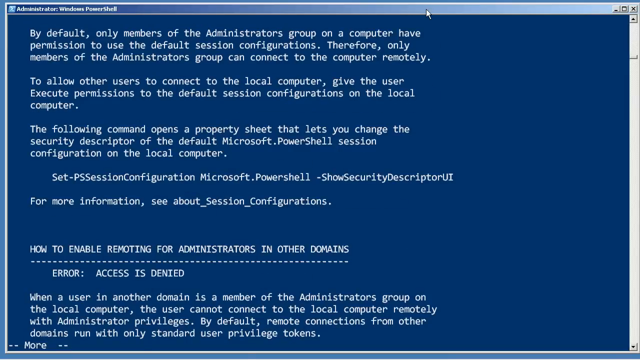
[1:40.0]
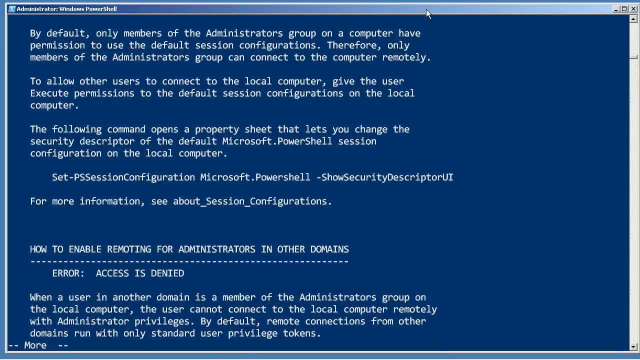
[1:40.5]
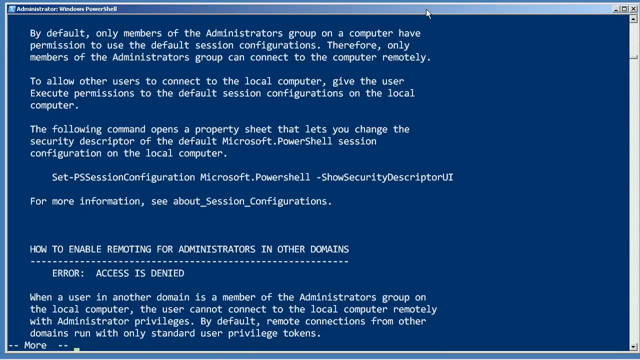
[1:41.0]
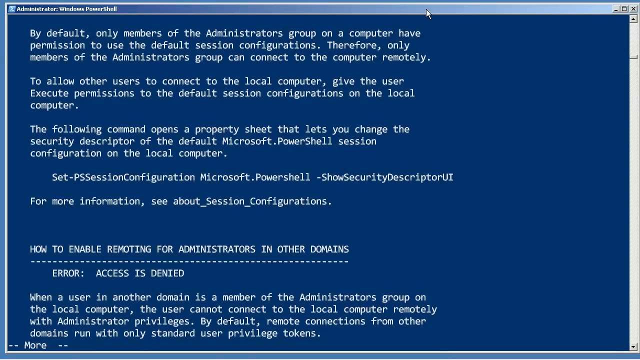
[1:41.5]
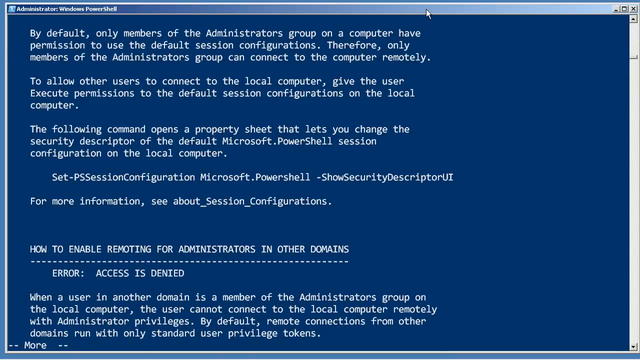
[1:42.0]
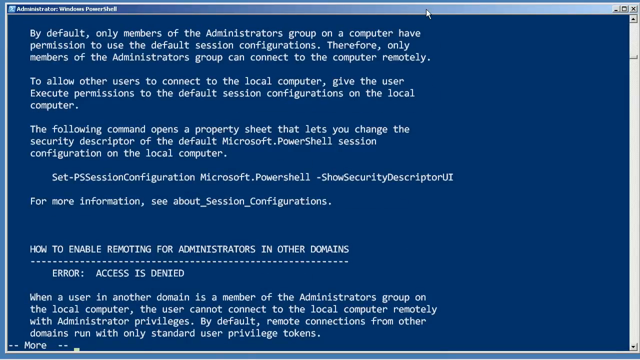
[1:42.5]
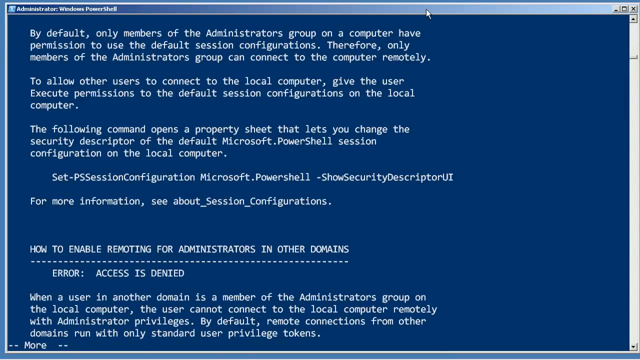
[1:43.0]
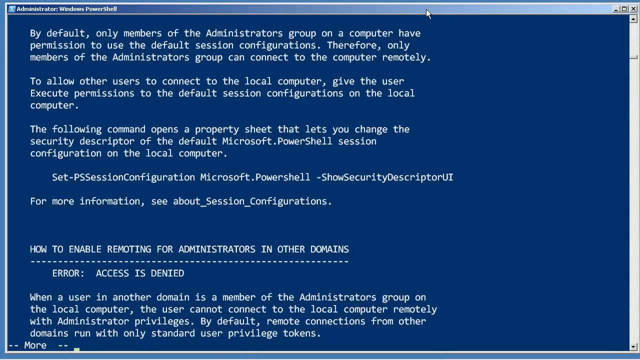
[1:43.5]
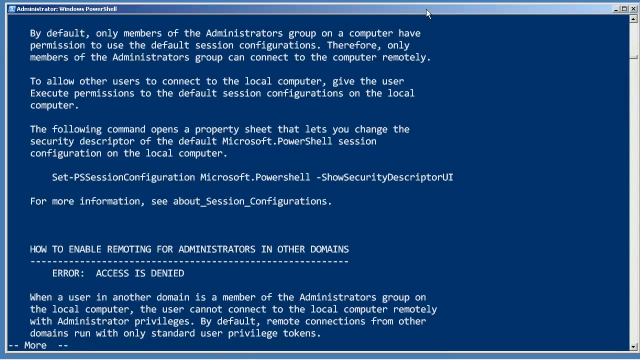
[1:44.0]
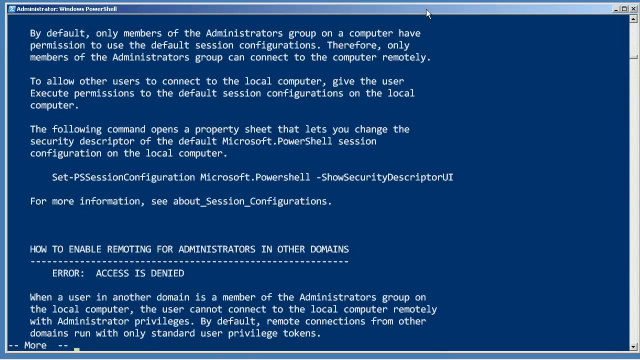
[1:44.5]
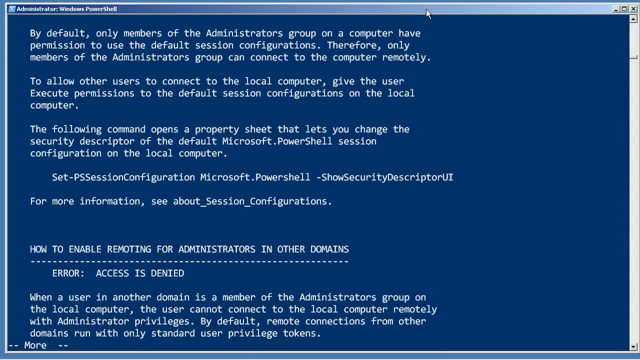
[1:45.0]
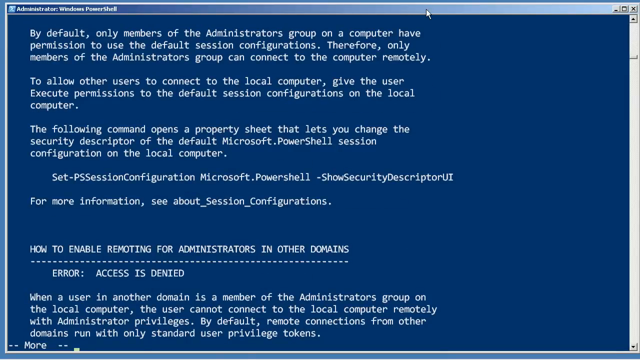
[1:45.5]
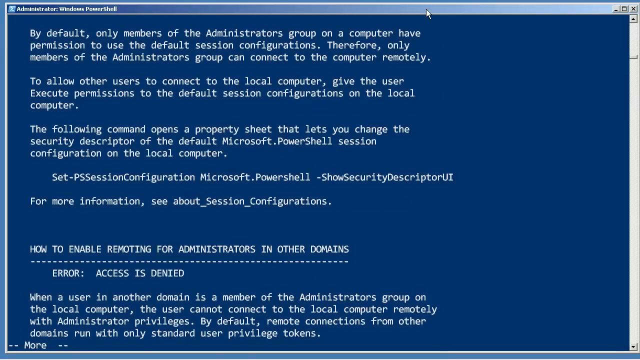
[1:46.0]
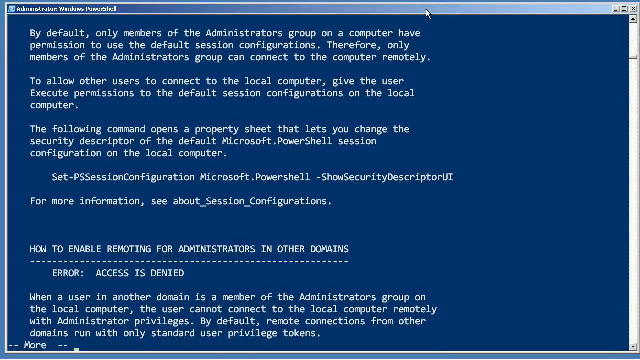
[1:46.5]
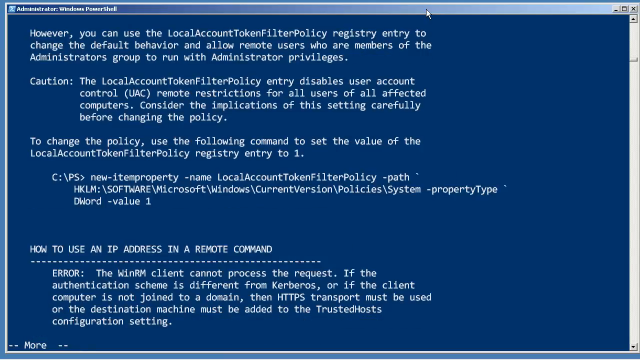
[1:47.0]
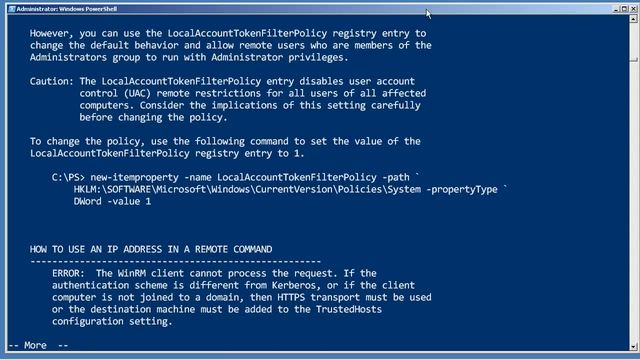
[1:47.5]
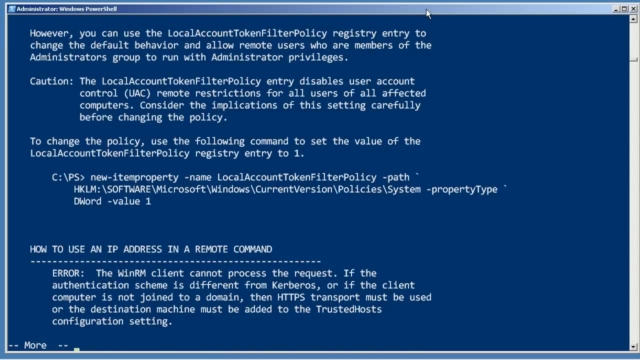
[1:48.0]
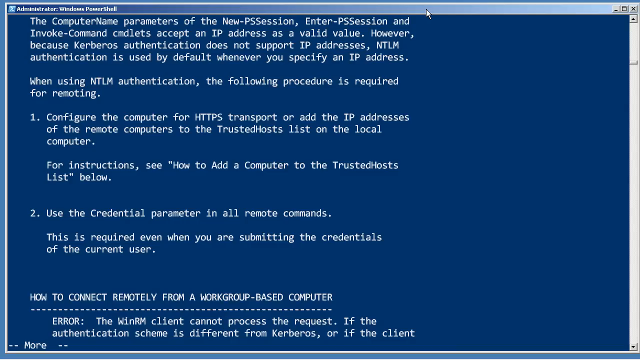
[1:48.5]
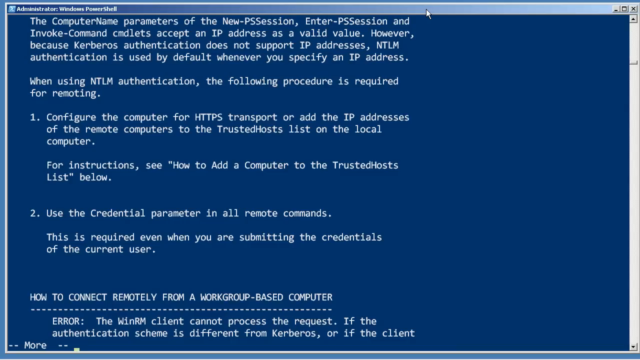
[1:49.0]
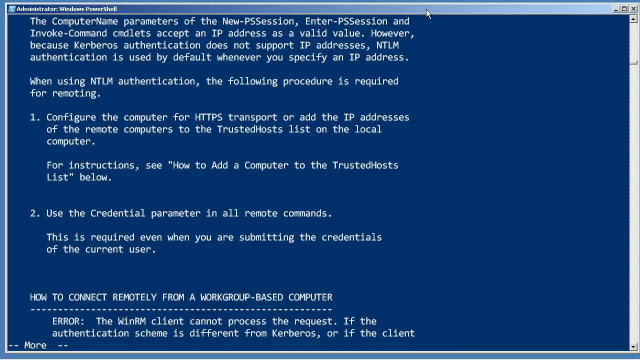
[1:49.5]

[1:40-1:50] As the scrolling continues, the text includes "only members of the administrator's group can connect to the computer remotely" and "To allow other users to connect to the local computer, give the user execute permissions to the default session configurations on the local computer." A heading about how to enable remoting for administrators in other domains appears, followed by "access denied." The person is still scrolling down, and near the end the text reads "when using NTLM authentication, the following procedure is required," with two items listed.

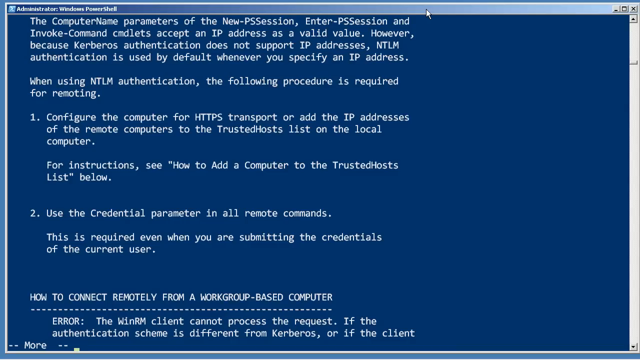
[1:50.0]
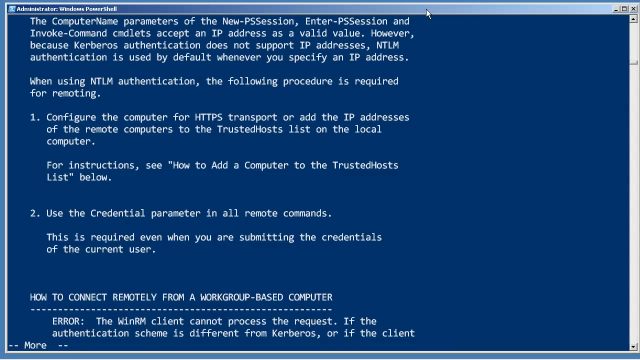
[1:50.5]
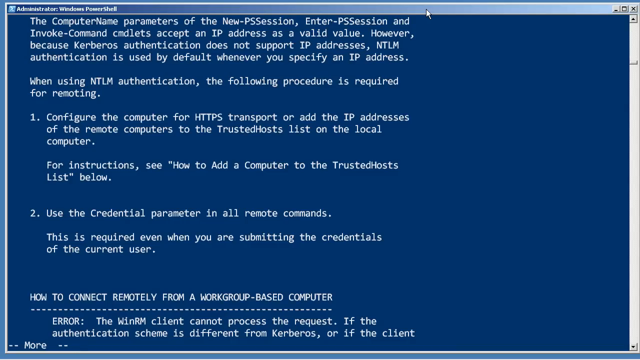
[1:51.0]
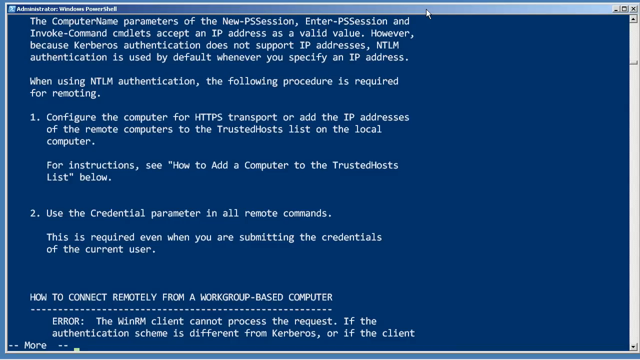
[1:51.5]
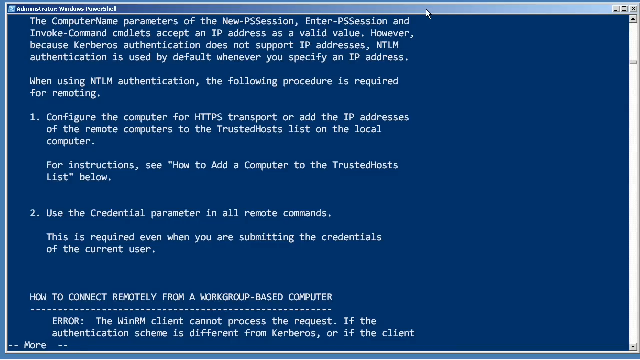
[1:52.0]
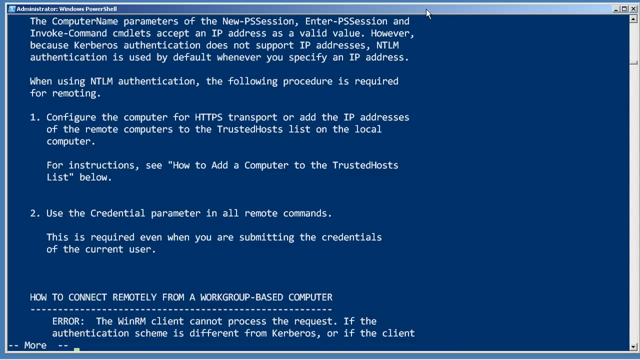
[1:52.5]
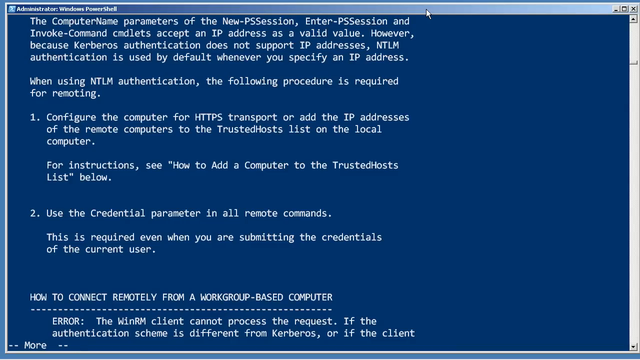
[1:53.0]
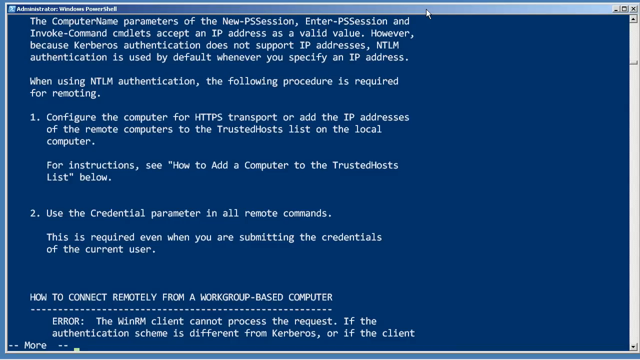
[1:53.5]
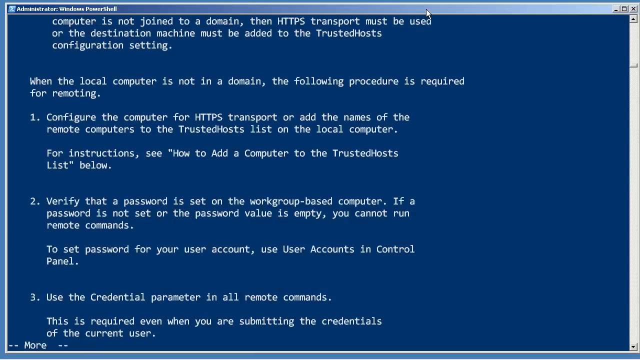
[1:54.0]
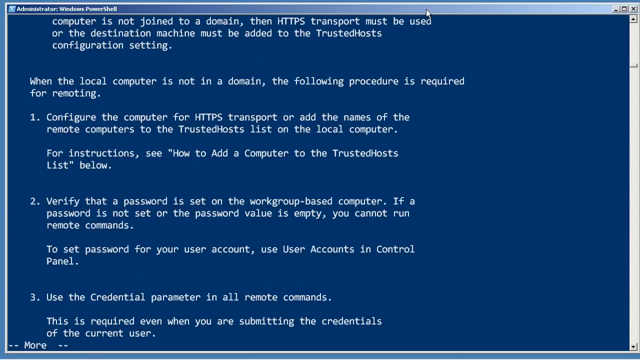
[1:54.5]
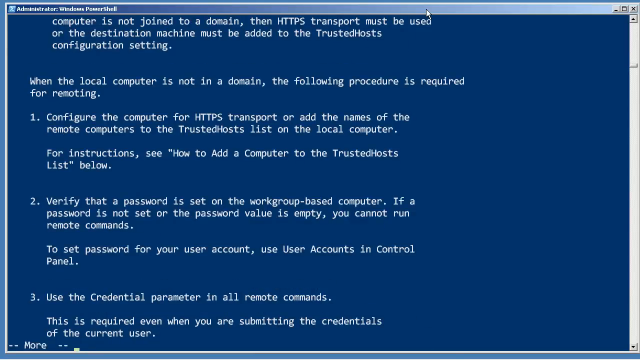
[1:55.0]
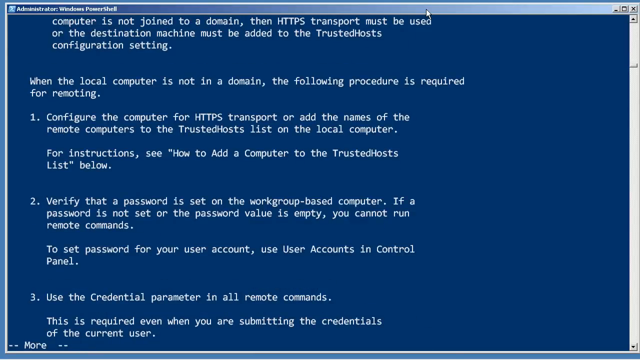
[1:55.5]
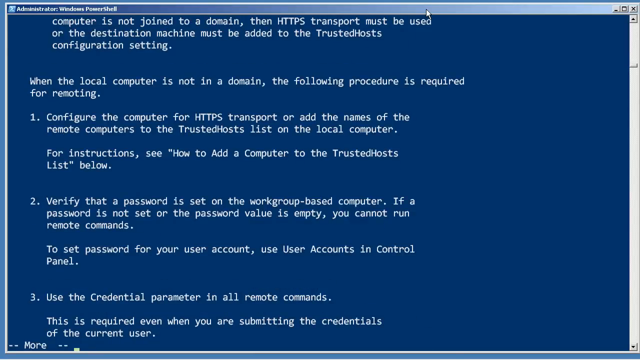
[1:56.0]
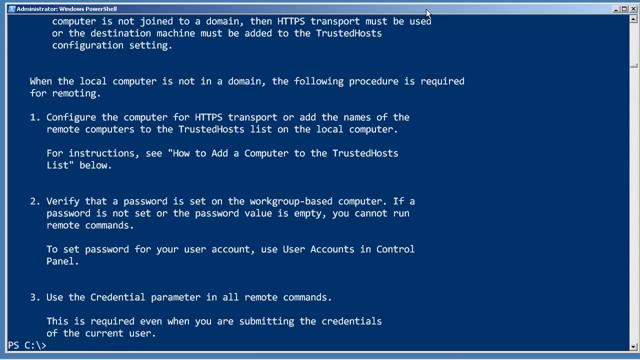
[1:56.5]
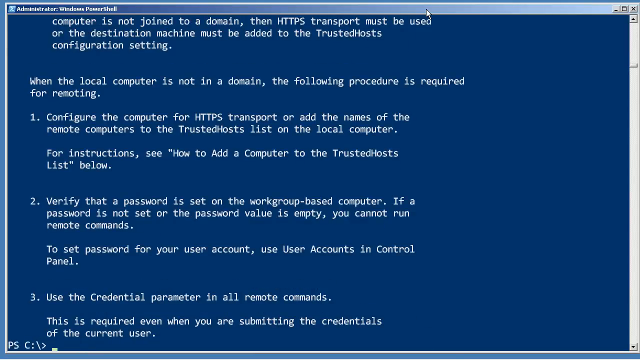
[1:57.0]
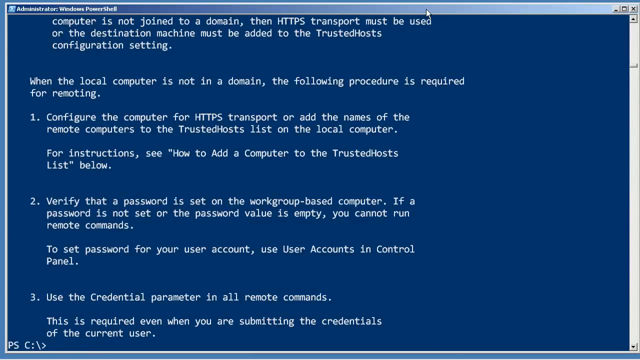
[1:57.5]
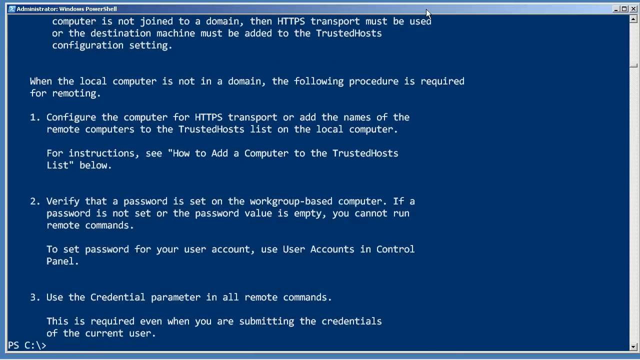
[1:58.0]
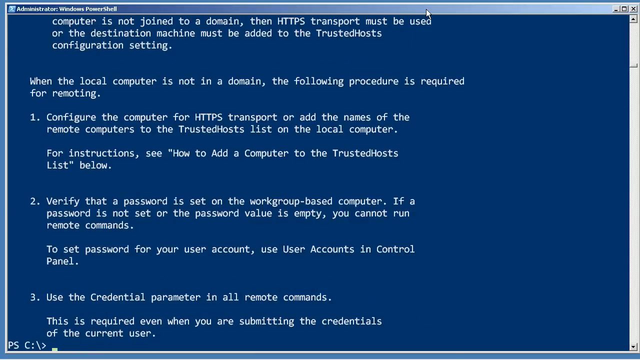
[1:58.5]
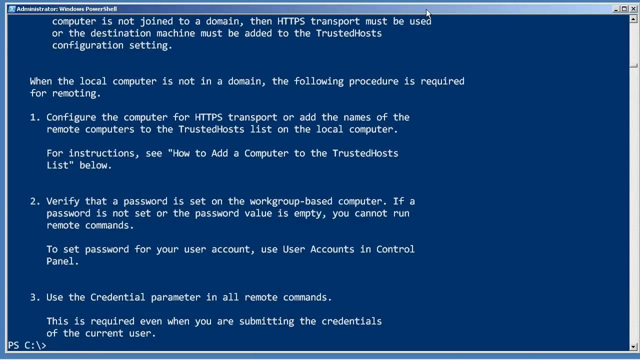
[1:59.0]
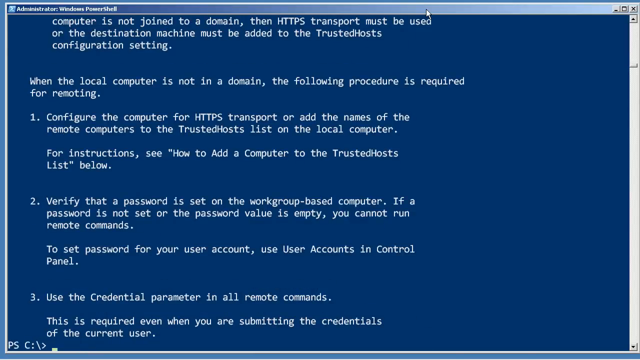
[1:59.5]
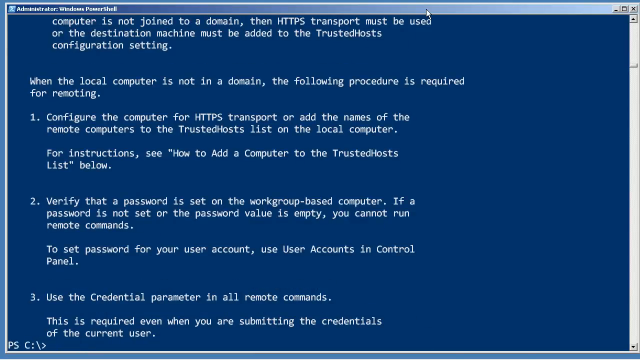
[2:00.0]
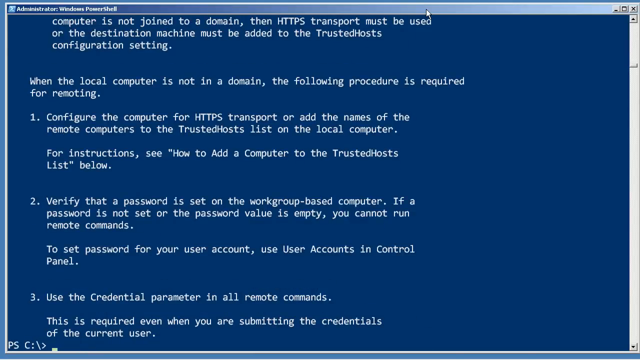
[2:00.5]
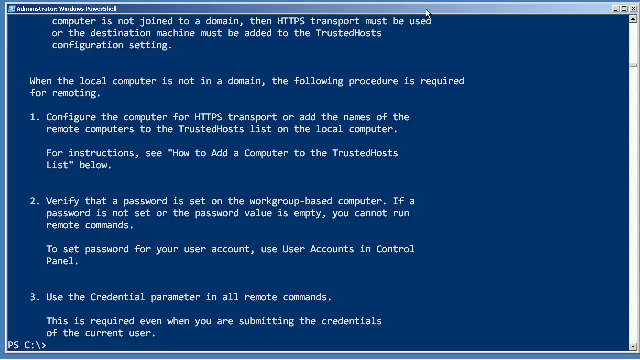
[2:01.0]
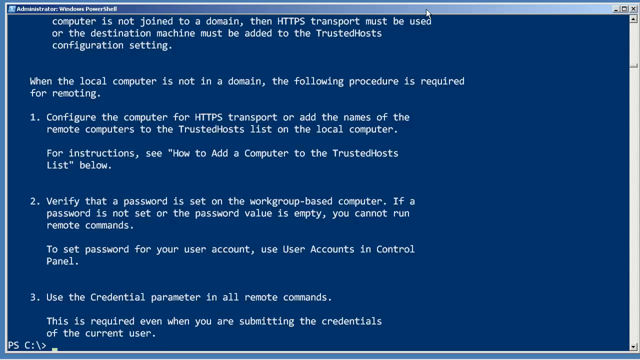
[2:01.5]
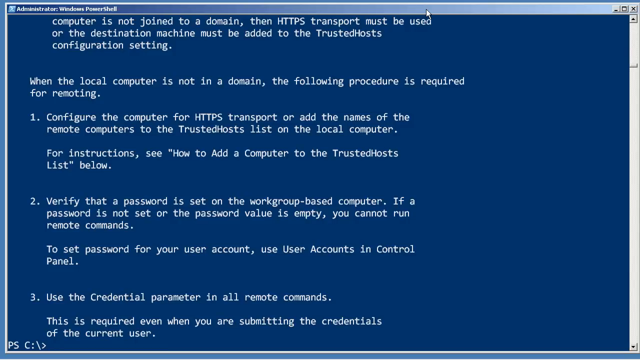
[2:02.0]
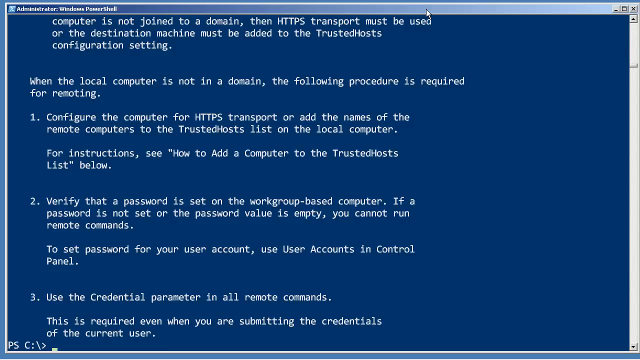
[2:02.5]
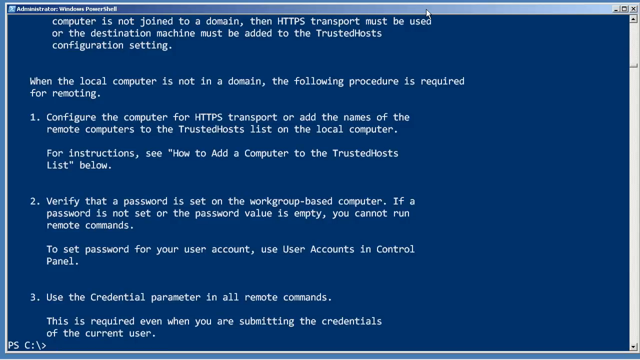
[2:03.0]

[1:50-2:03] The two listed items read "1. configure the computer for HTTPS transport," with the instruction "For instructions see how to add computer to trusted host list below," and "2. use the credential parameter in all remote commands. This is required even when you are submitting credentials of the current user." A heading reads "How to connect remotely from a workgroup-based computer." The person scrolls some more, and at one point "more" appears in the lower left corner, apparently in yellow, then disappears.